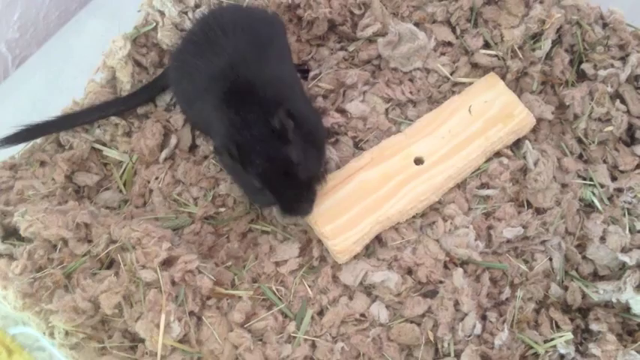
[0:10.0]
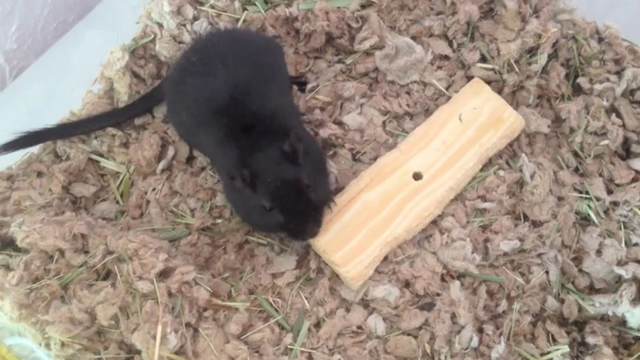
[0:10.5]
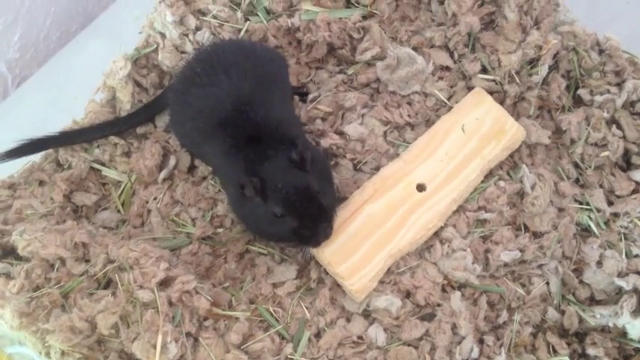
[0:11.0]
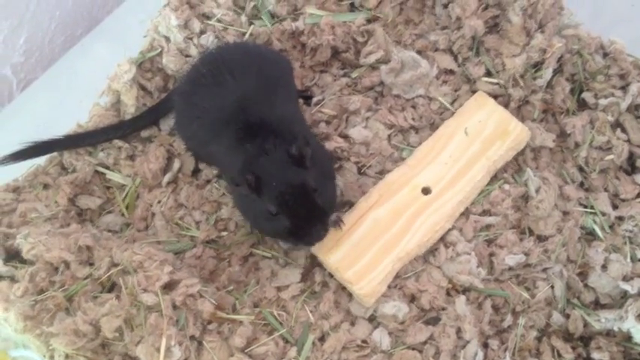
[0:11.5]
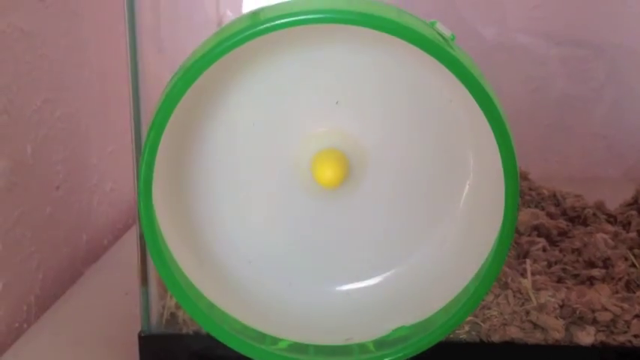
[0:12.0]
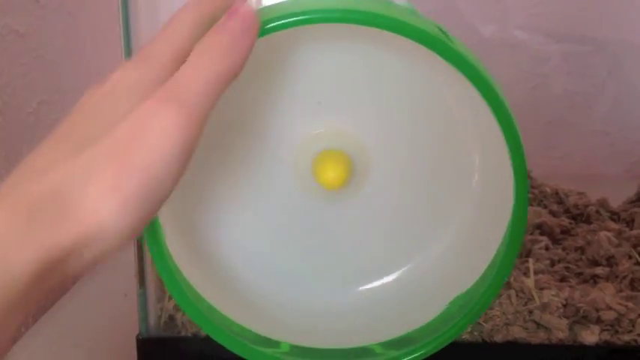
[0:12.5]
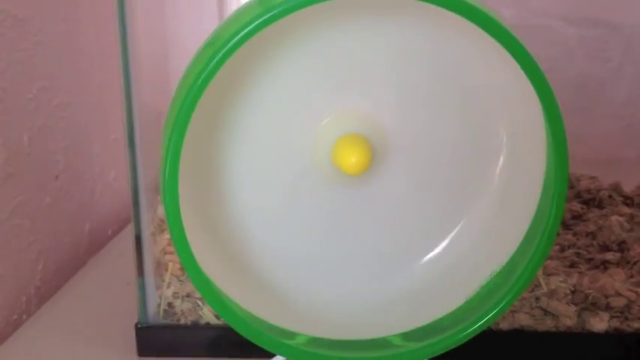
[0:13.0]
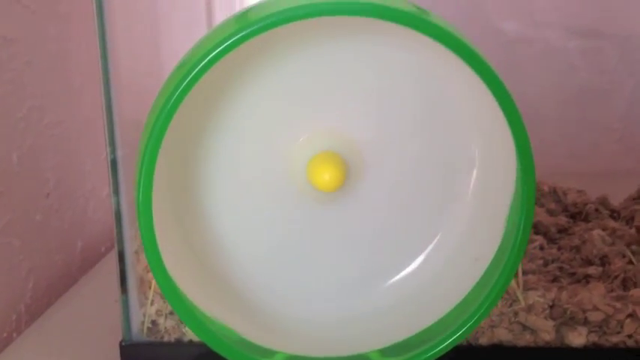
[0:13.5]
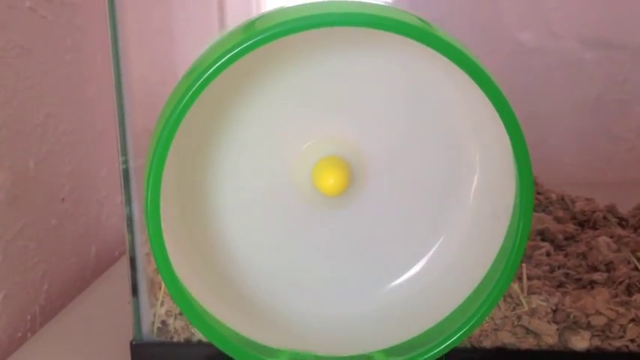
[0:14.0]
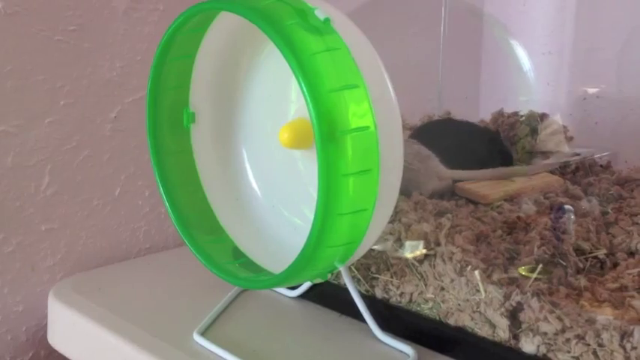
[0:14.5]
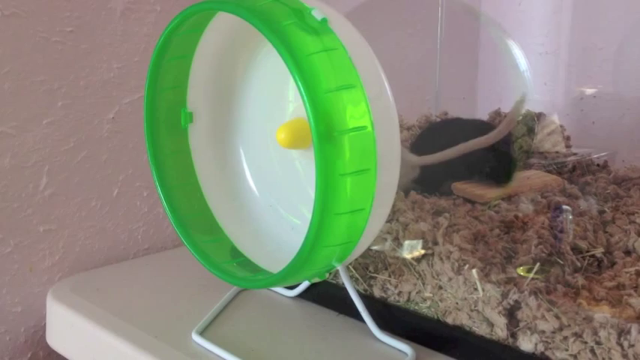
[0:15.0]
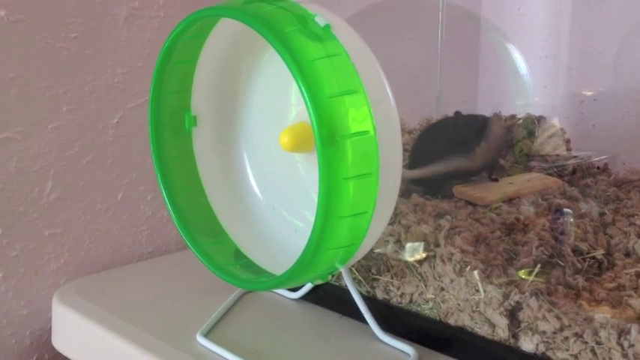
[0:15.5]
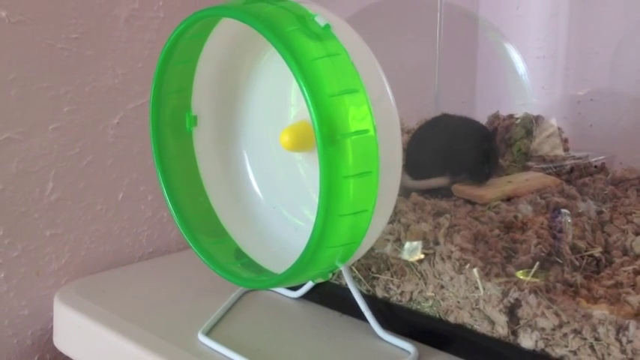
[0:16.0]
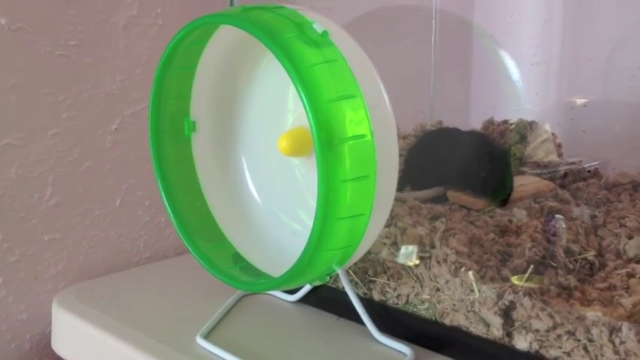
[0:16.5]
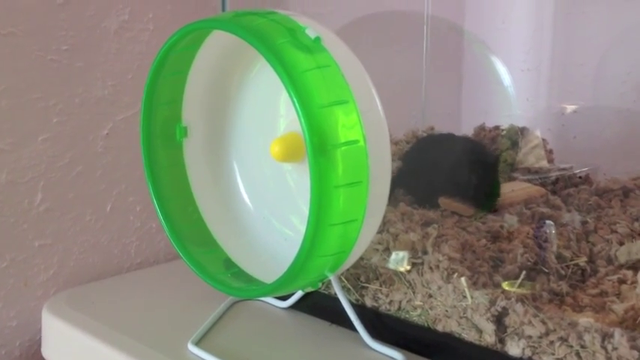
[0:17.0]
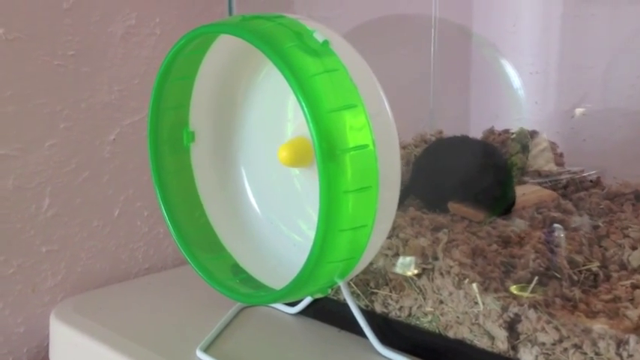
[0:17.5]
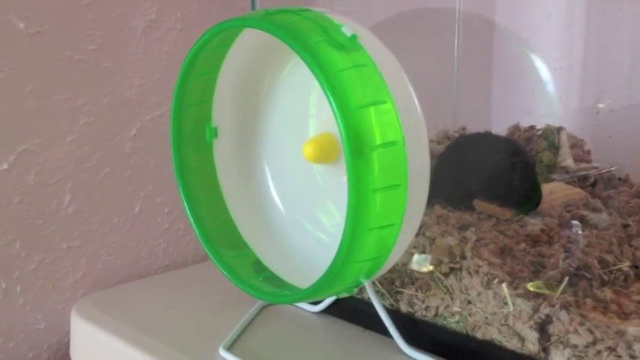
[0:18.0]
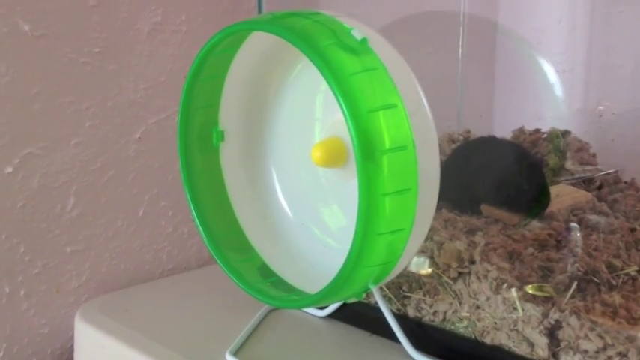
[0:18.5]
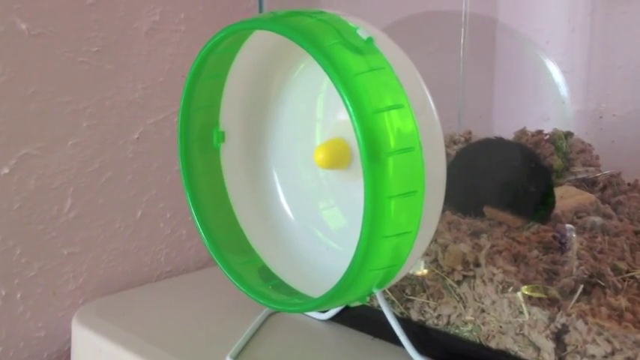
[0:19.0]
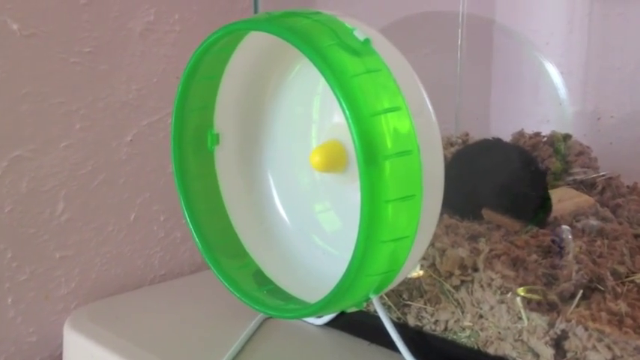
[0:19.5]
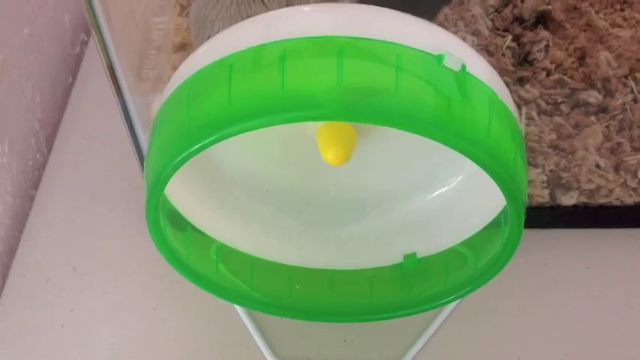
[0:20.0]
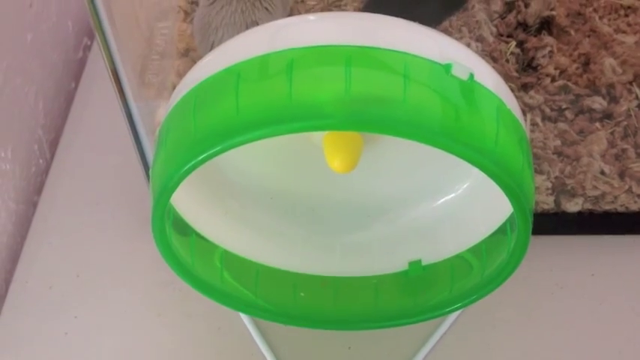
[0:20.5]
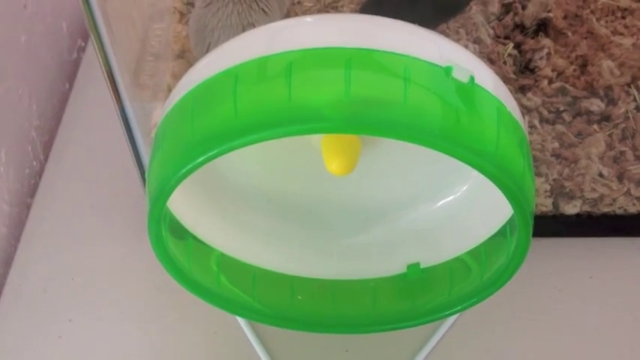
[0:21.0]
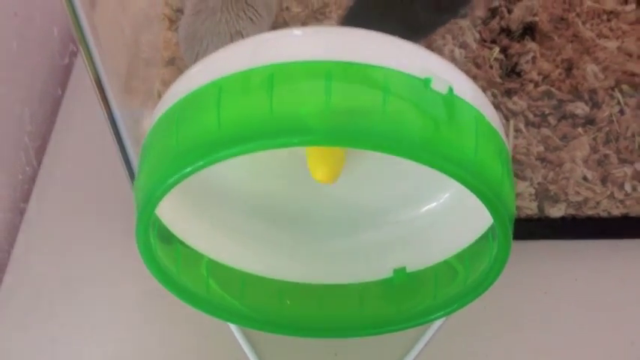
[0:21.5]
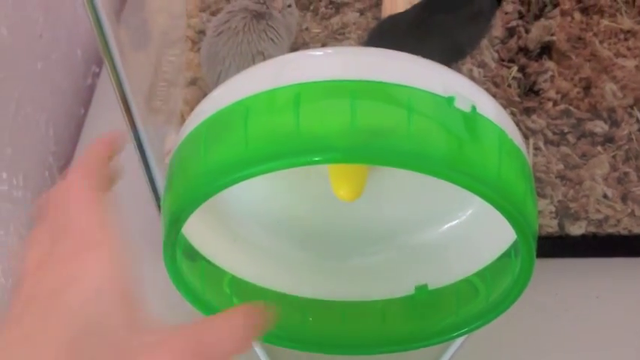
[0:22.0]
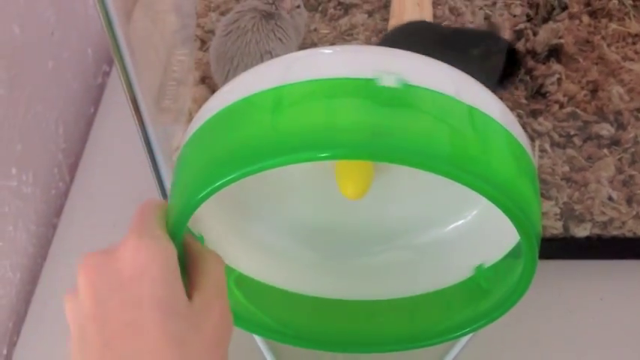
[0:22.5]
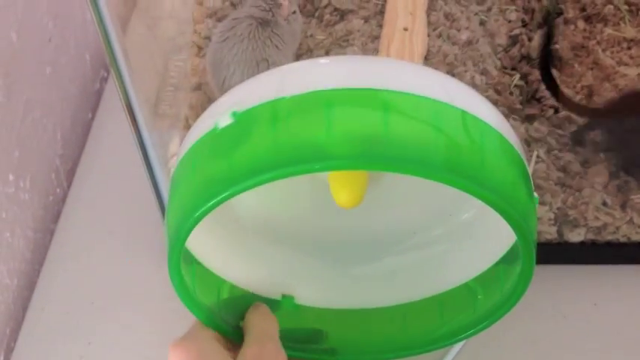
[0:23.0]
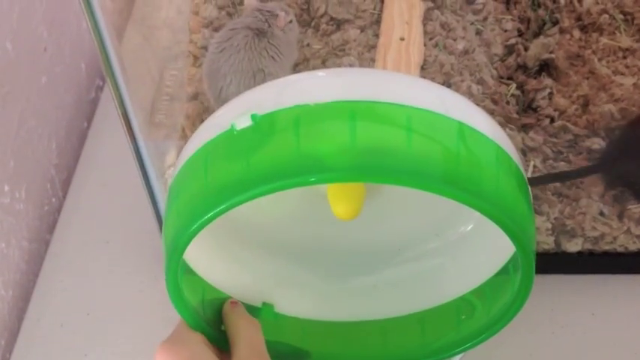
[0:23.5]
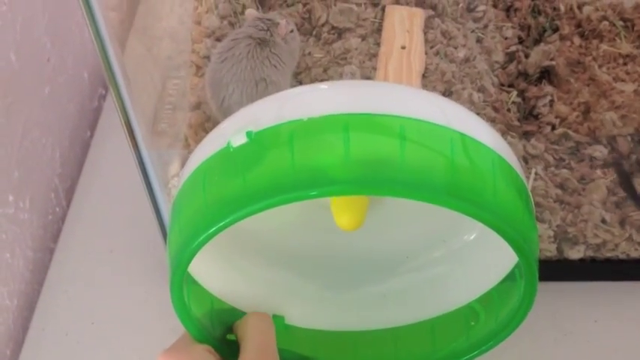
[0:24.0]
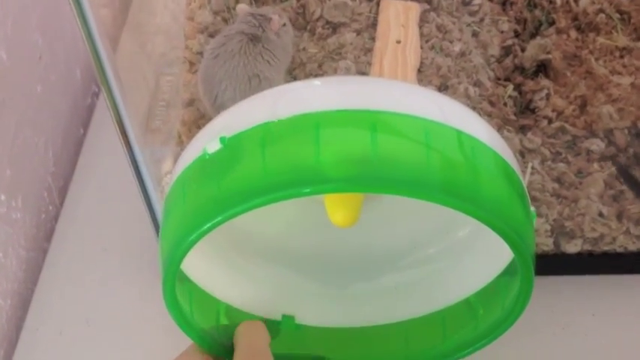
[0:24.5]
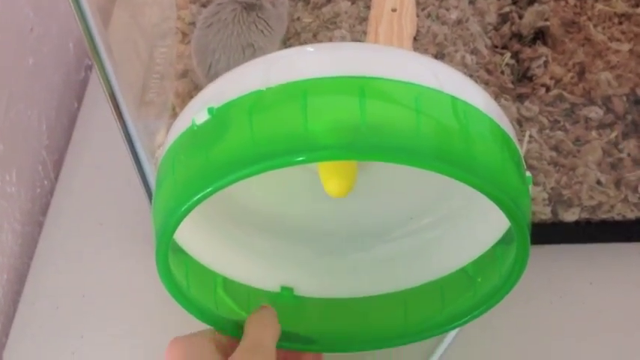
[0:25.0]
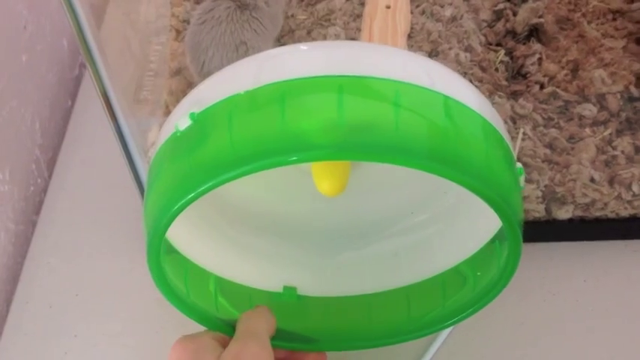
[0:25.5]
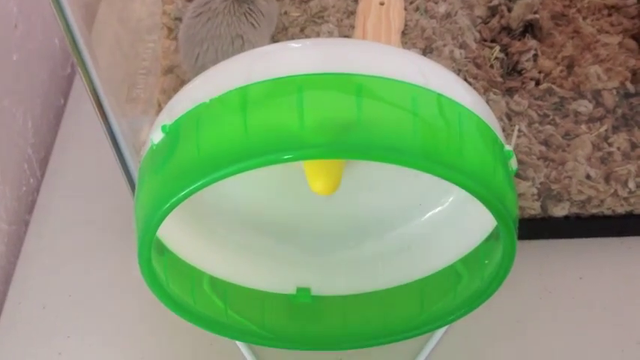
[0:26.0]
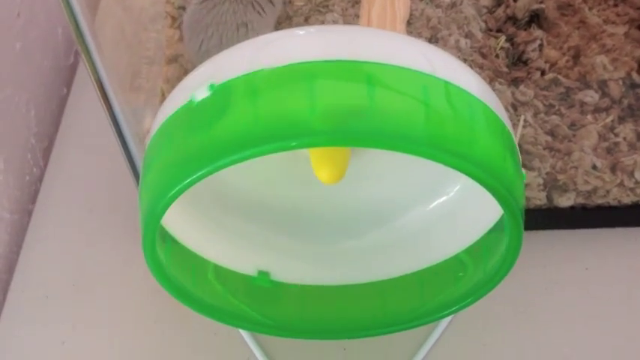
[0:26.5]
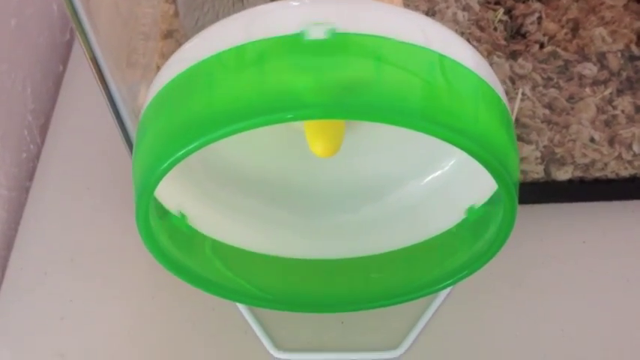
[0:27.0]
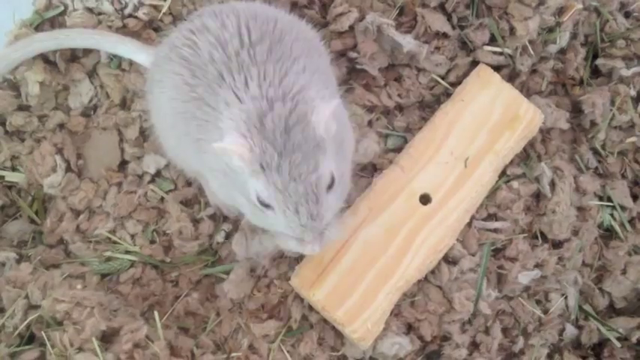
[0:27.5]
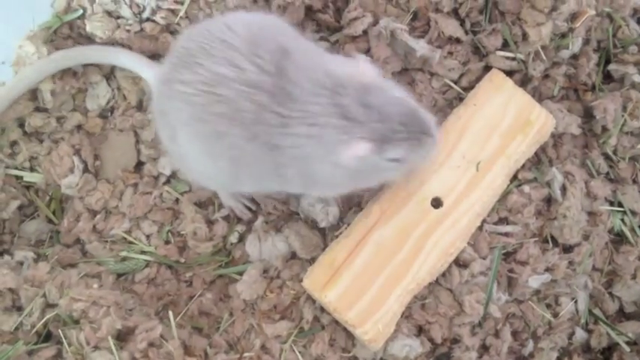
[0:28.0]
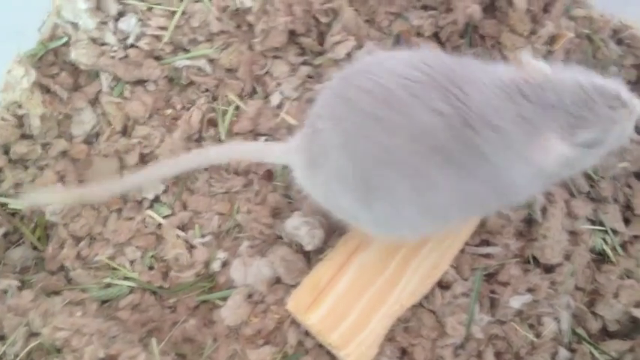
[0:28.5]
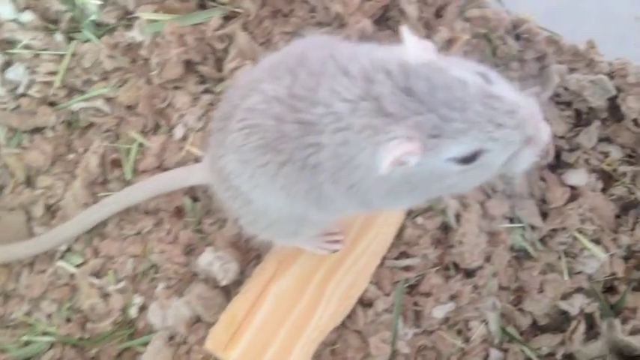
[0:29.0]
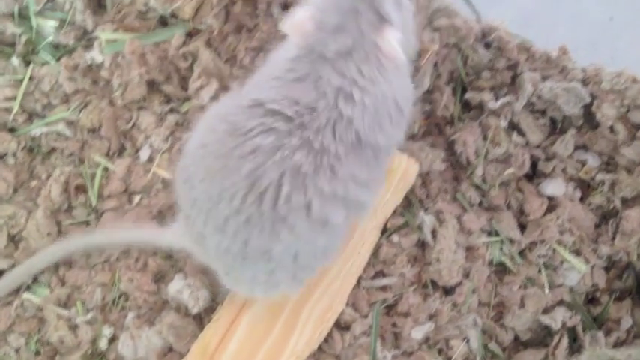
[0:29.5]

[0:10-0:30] The black gerbil is on the screen, now on the side of the wood. A green gerbil wheel is then shown: it is green on the outside and white surrounding the middle, with a yellow bit of plastic protruding from the centre, and it is spinning very fast. A hand hovers to the top left of the wheel, then pushes down onto it and spins it downwards and to the right. Next the wheel is shown outside the gerbils' enclosure; in the background the gerbils move around inside the enclosure, and the black one is still gnawing on the wood. The video cuts to a shot of the wheel from above, with the gerbils visible in the glass enclosure. A hand steadies the wheel and then starts to spin it. A shot from above looks down on the white-grey gerbil standing on the wood; it stands up on its hind legs and sniffs the air.